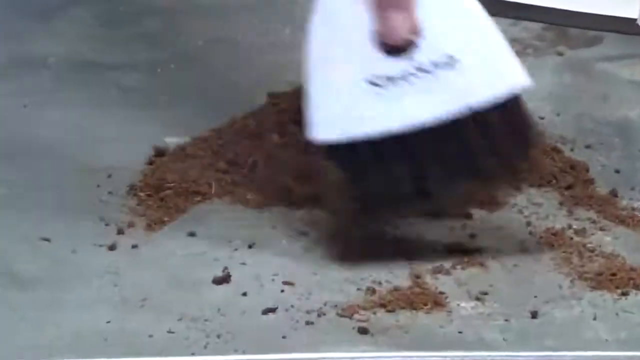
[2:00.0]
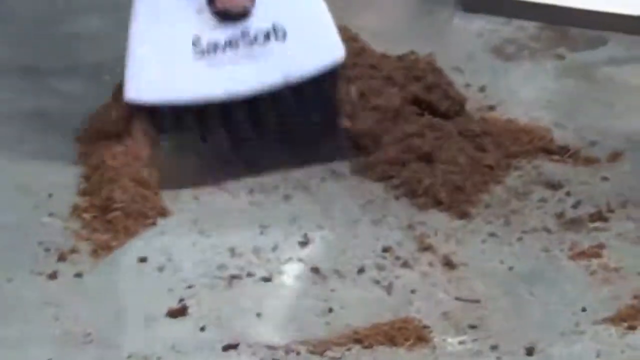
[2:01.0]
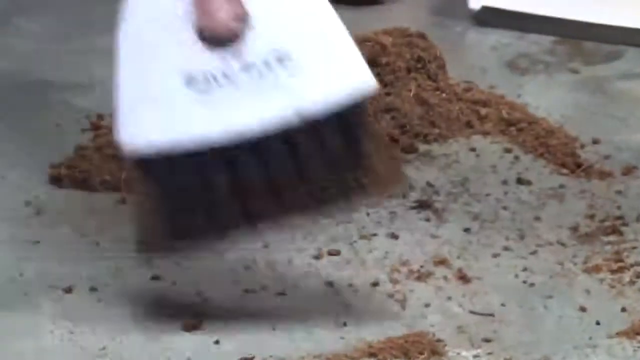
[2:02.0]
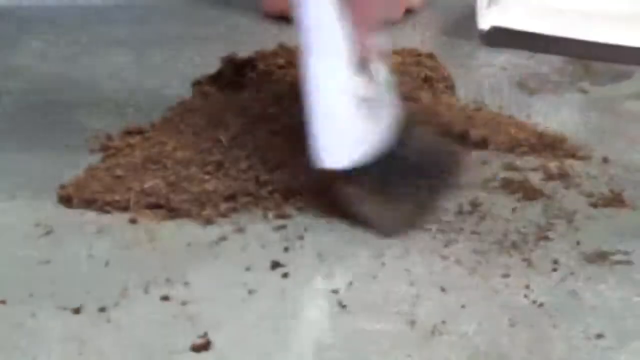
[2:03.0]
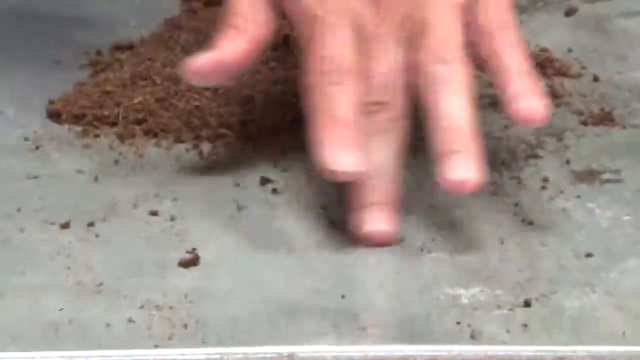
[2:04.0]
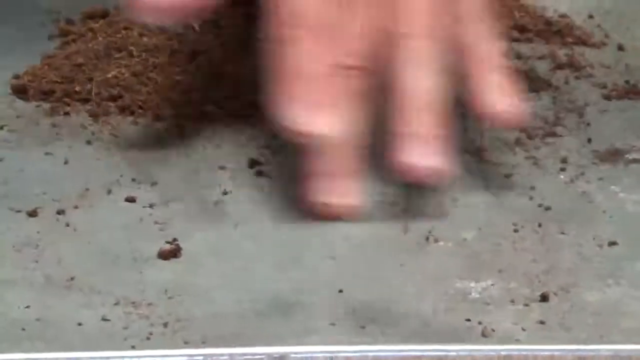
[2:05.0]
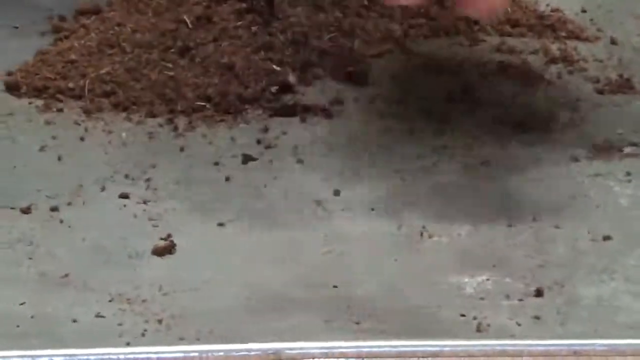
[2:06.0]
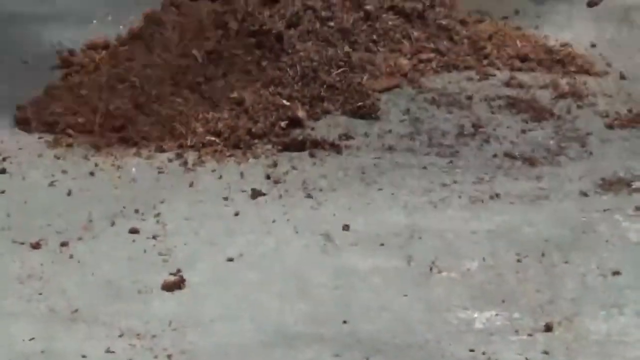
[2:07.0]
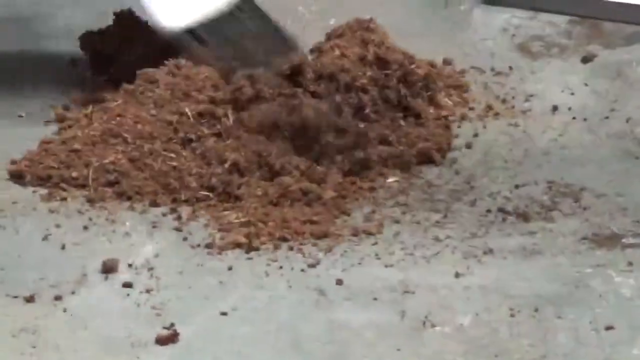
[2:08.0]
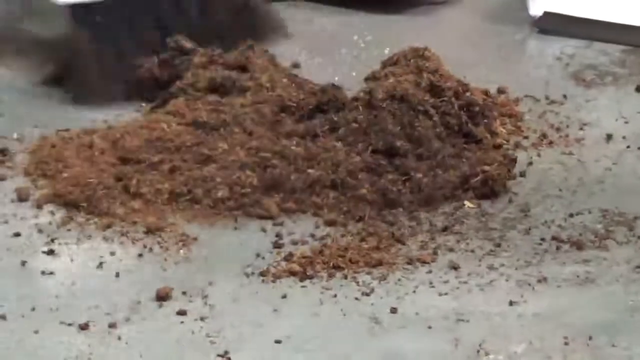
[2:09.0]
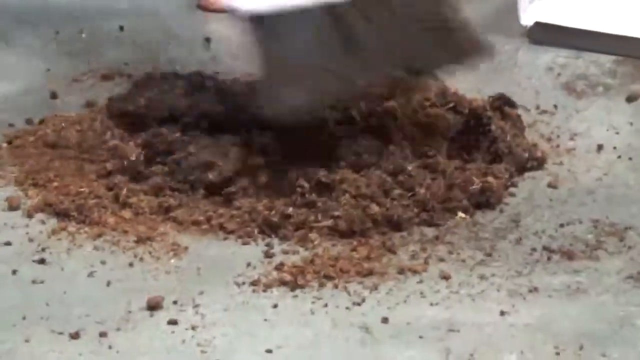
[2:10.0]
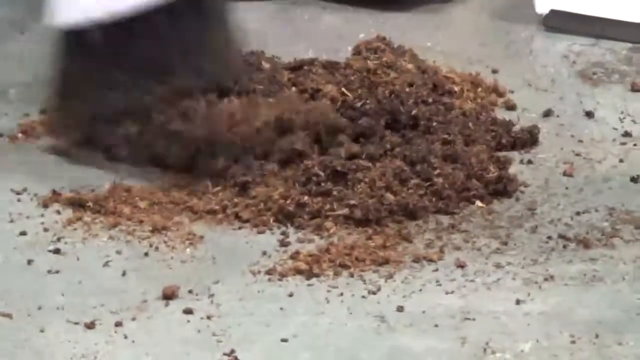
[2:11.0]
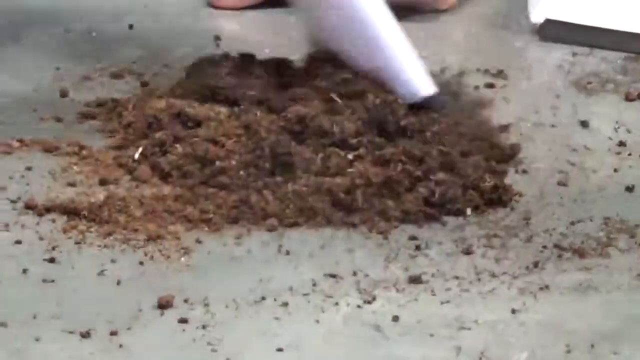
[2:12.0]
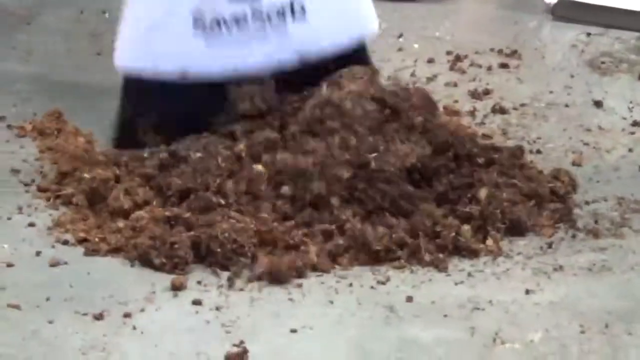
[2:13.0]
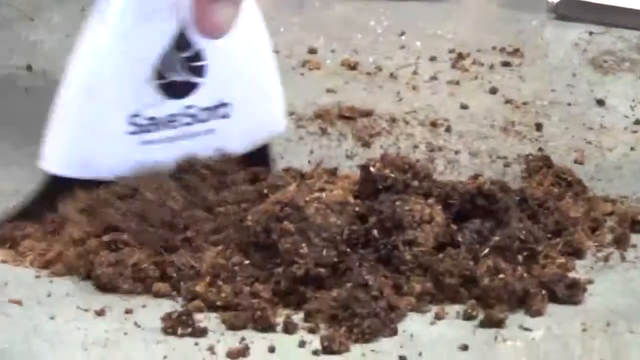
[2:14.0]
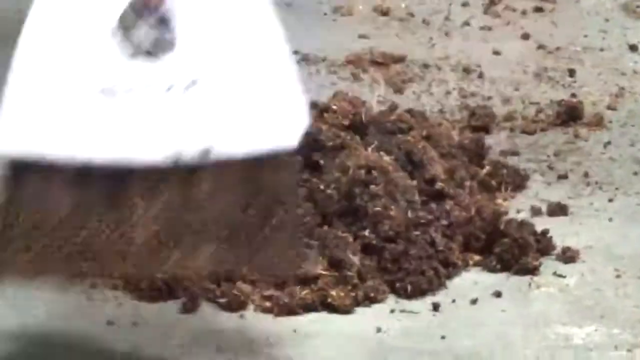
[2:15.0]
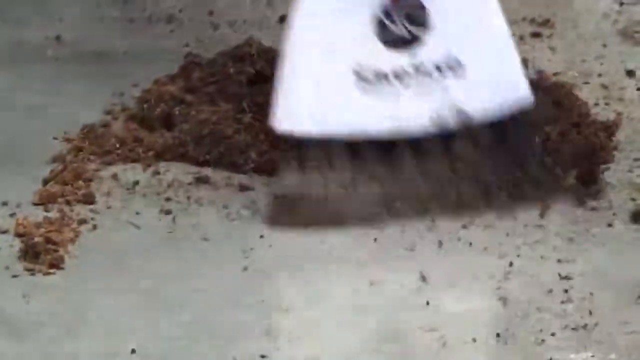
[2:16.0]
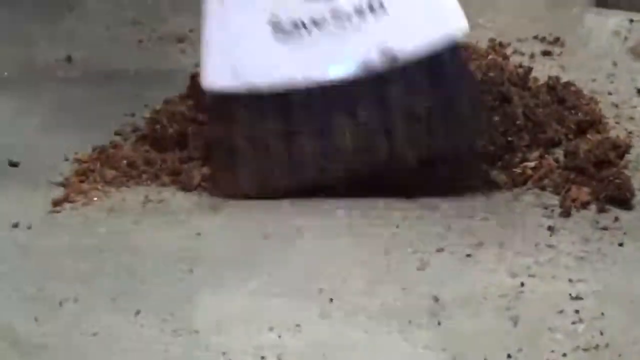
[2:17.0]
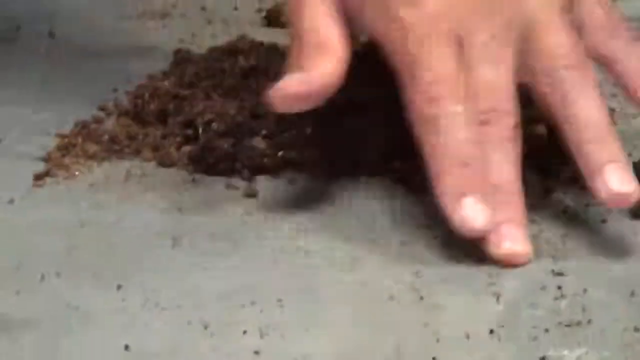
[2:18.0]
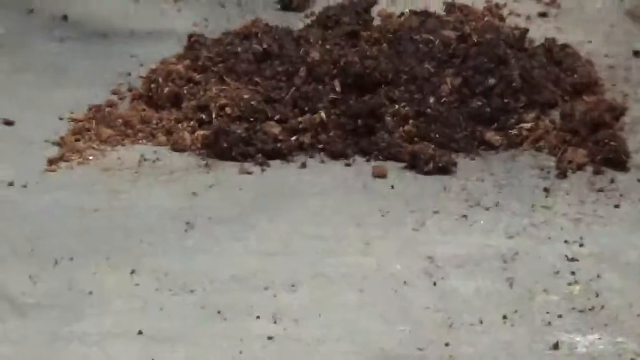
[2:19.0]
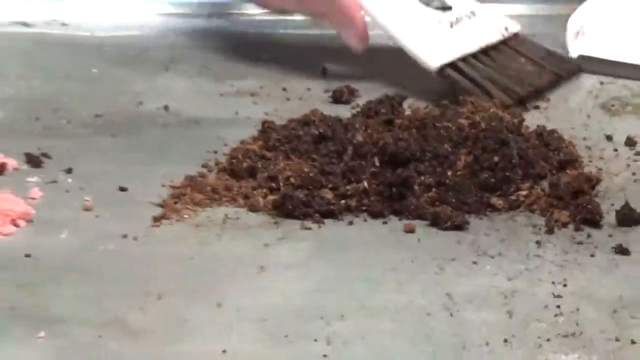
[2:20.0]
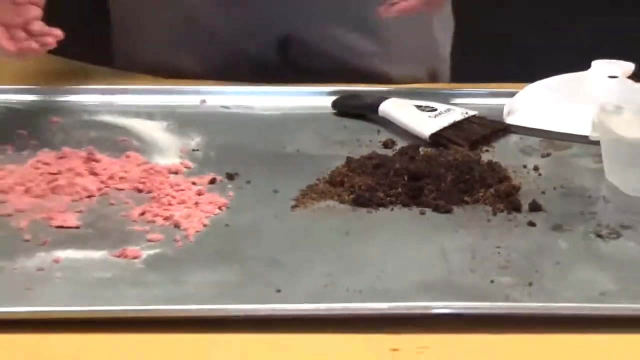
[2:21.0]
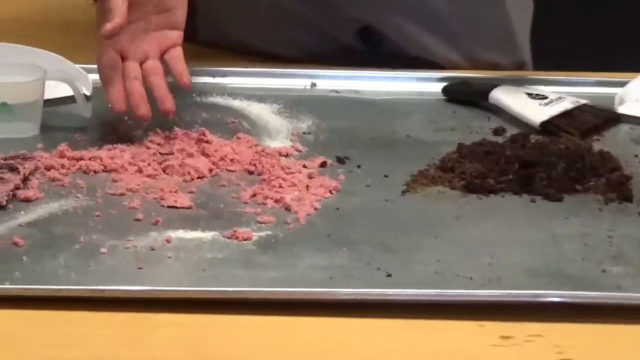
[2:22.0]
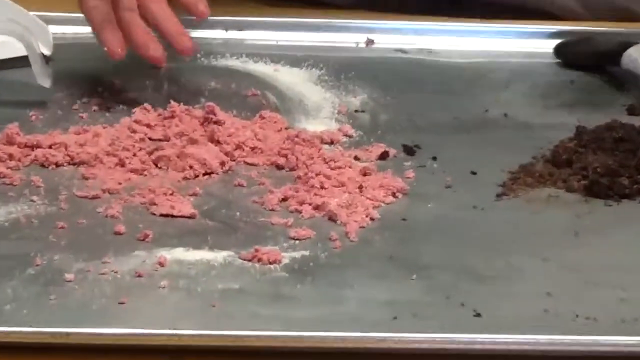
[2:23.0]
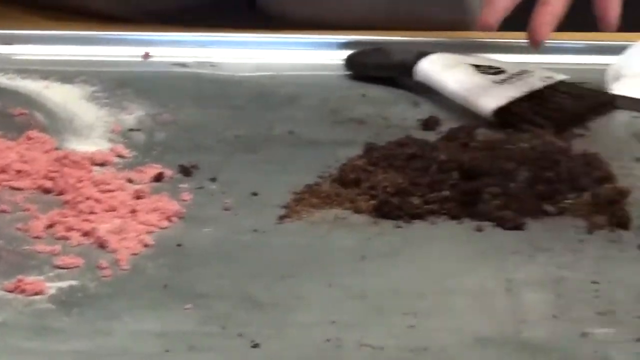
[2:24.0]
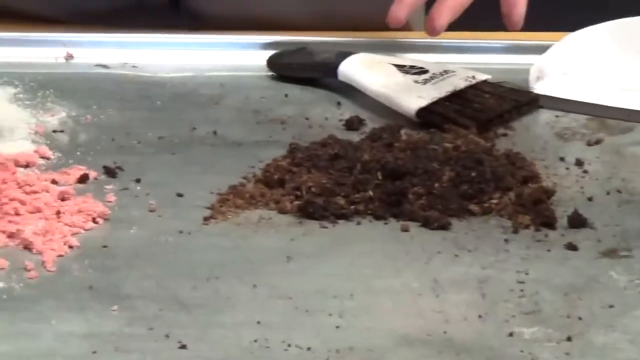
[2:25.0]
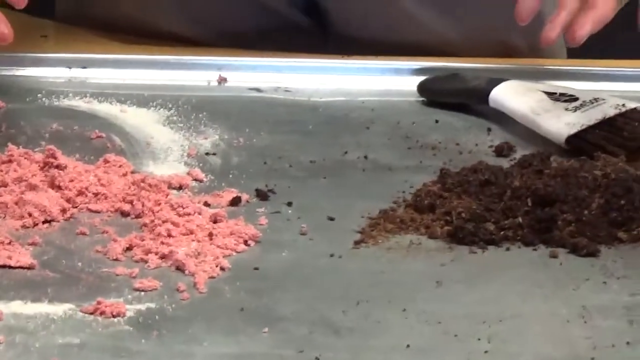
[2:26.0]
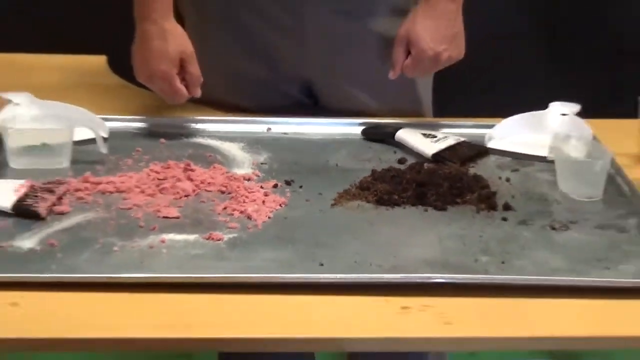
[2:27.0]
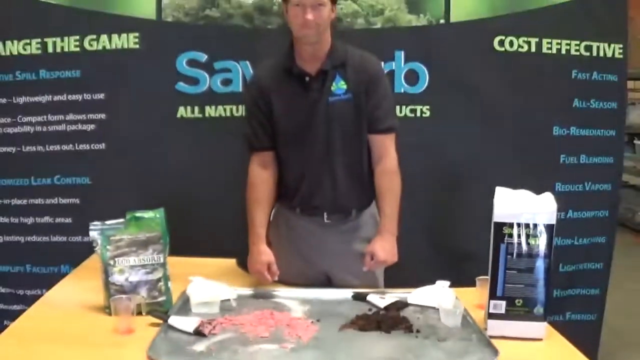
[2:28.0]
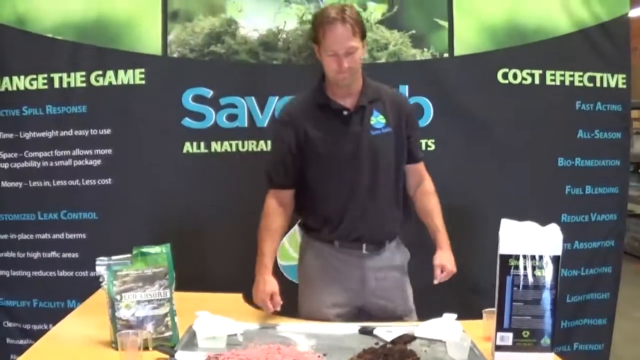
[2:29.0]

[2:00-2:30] Using the same brush, the man mixes the brown product and the red liquid vigorously. He uses his fingers to draw on the area where he poured the liquid, and there are no signs of liquid. The red liquid did not change the color of the brown product; it only looks darker. The man keeps drawing on the tray. The video zooms out, and the man looks down at the table and leaves the scene.